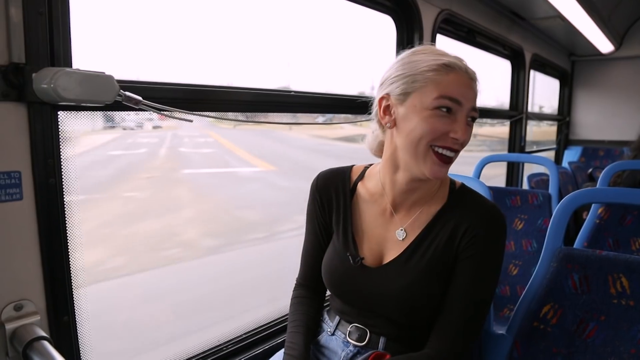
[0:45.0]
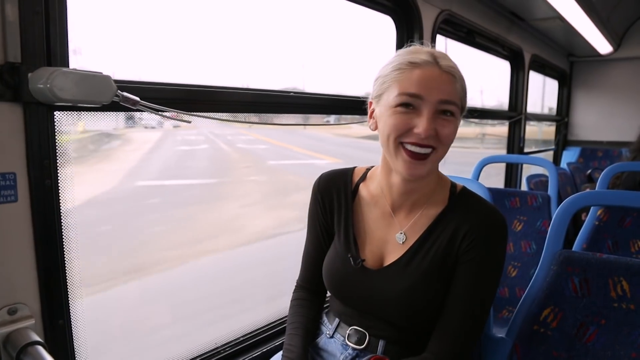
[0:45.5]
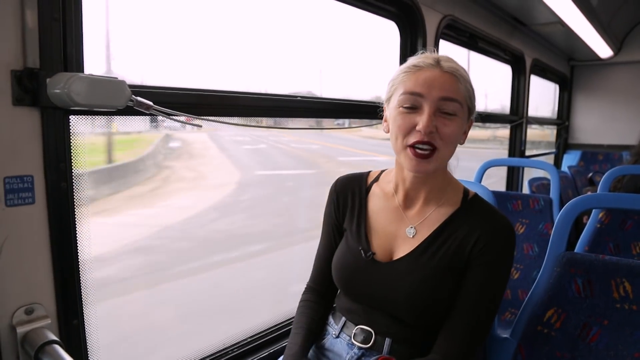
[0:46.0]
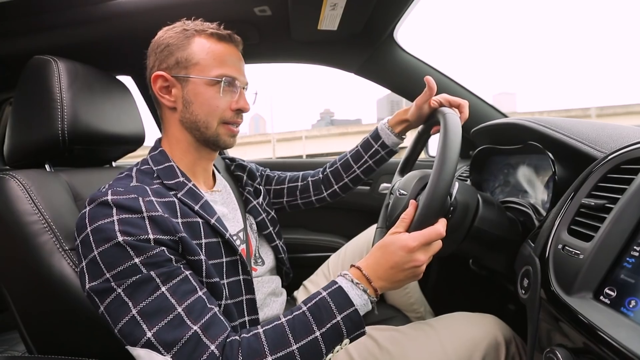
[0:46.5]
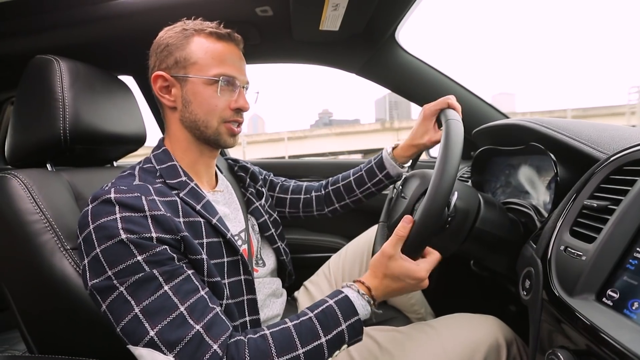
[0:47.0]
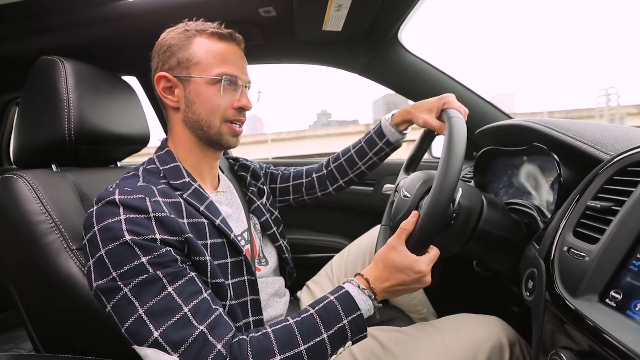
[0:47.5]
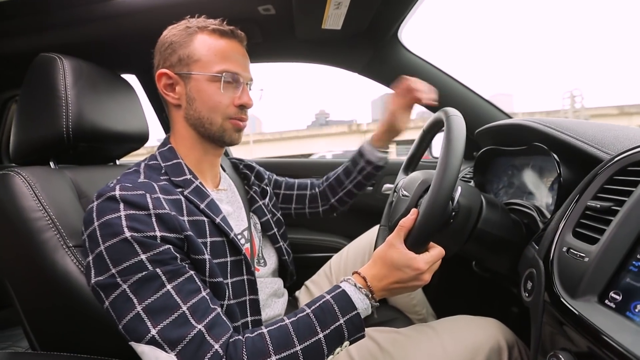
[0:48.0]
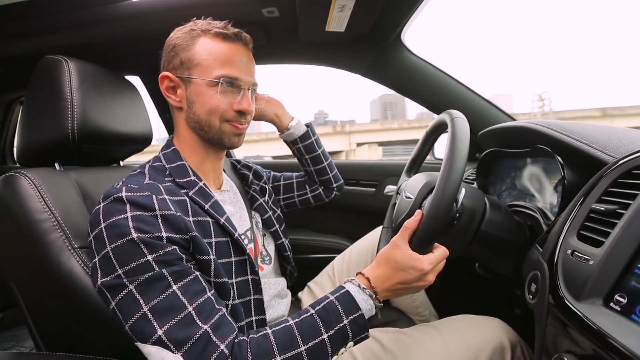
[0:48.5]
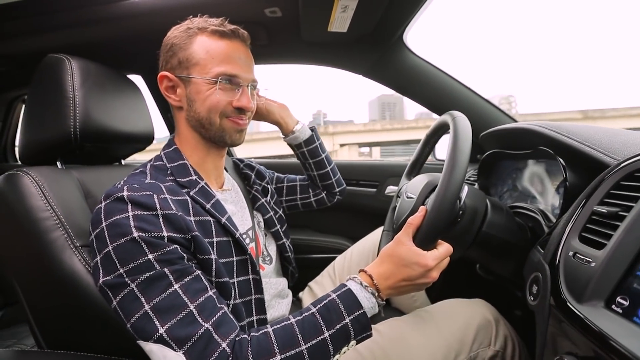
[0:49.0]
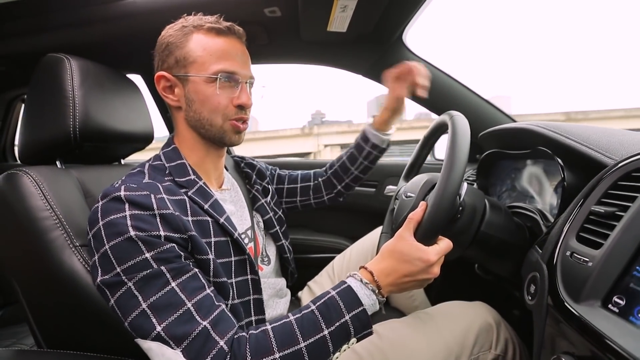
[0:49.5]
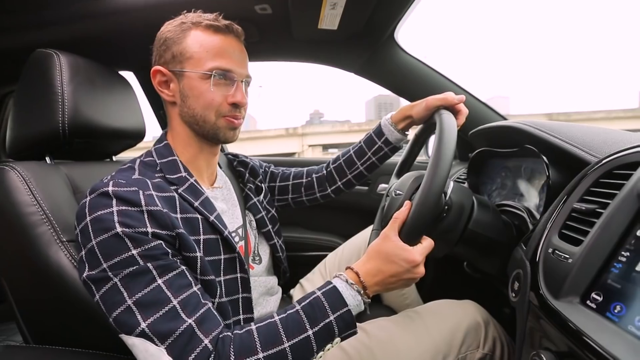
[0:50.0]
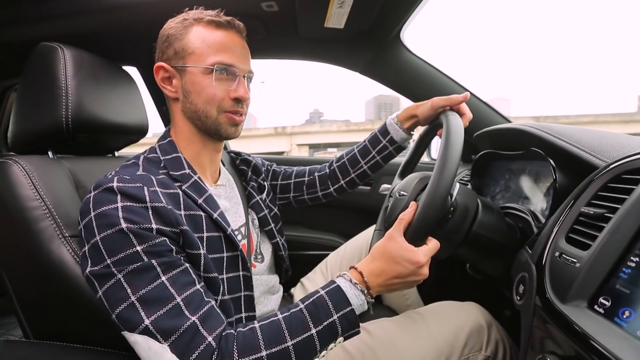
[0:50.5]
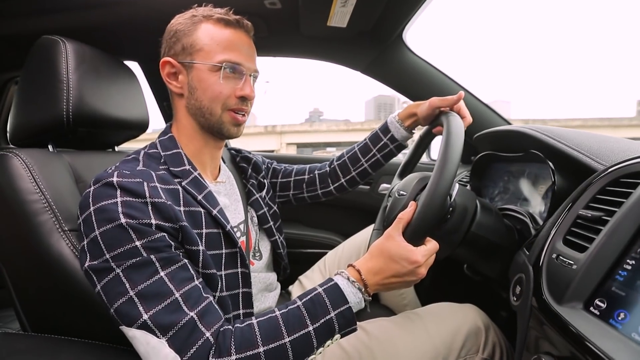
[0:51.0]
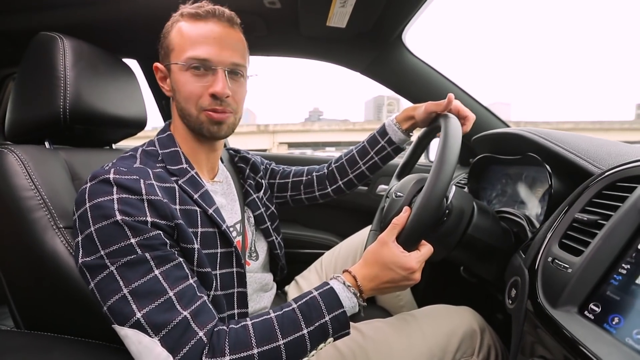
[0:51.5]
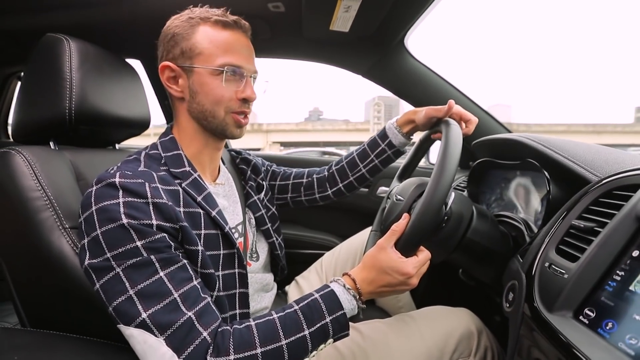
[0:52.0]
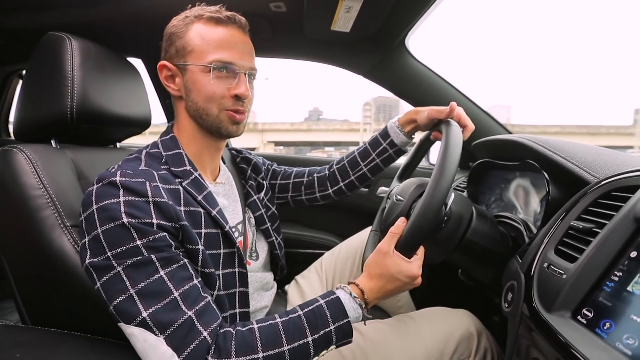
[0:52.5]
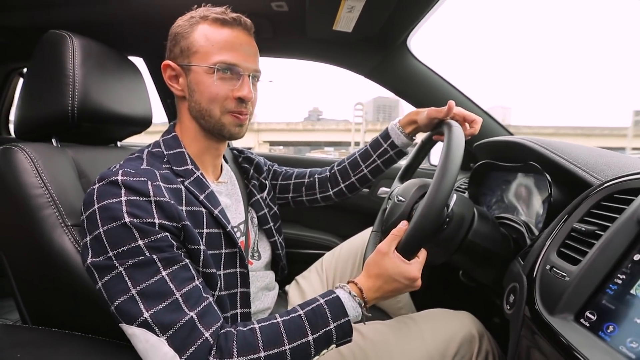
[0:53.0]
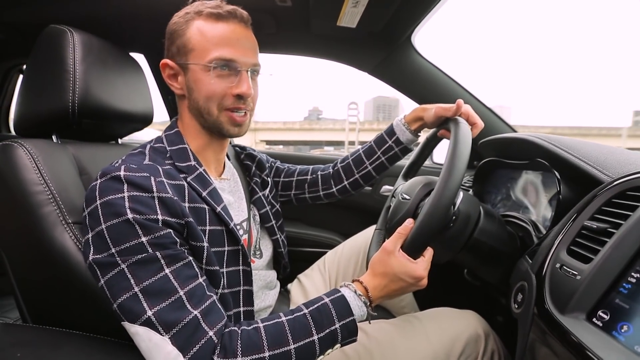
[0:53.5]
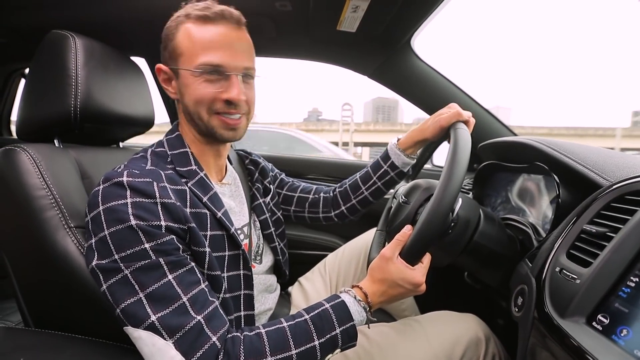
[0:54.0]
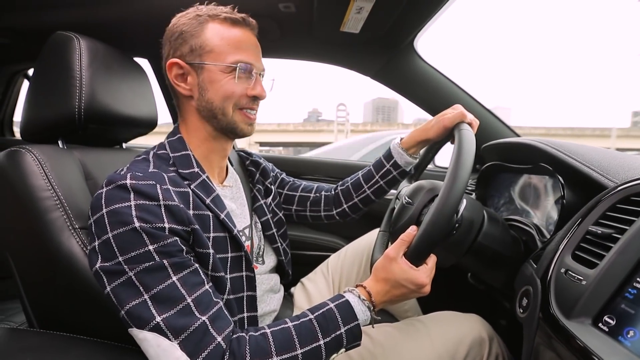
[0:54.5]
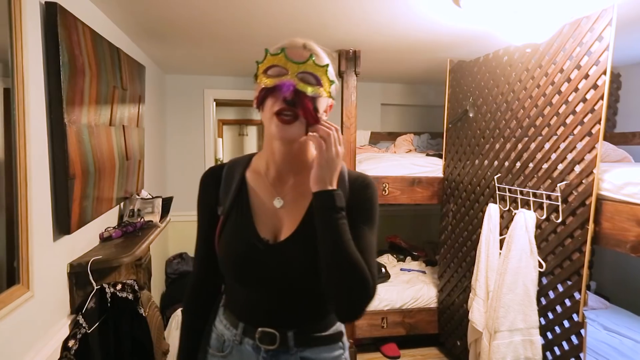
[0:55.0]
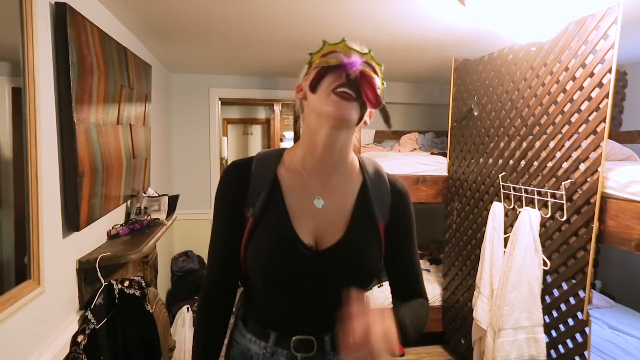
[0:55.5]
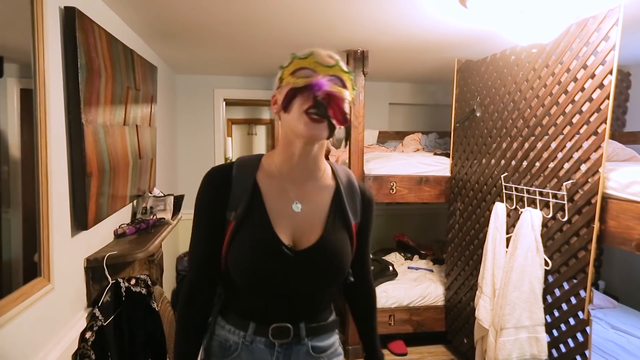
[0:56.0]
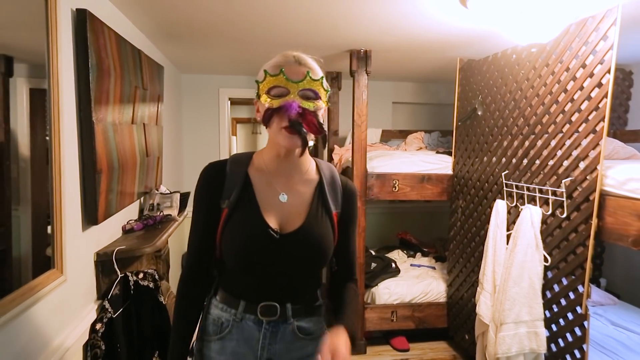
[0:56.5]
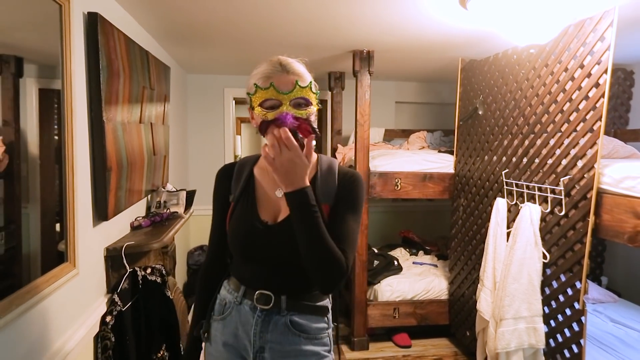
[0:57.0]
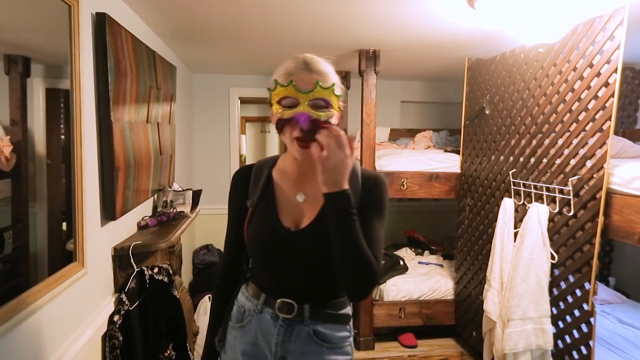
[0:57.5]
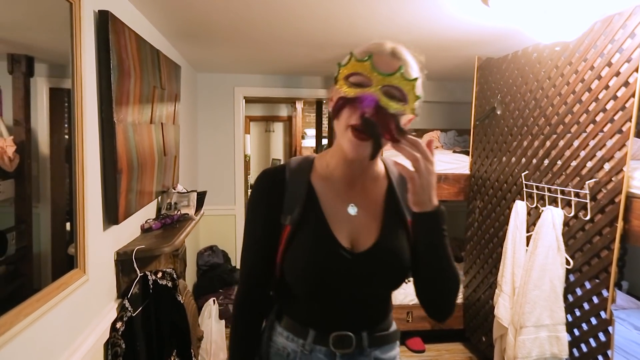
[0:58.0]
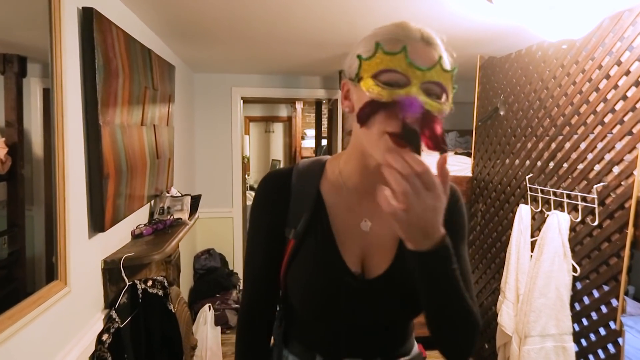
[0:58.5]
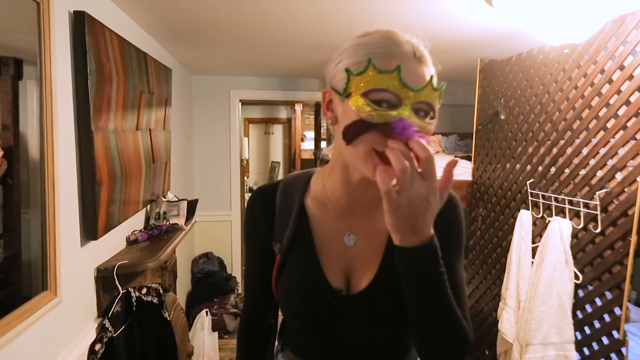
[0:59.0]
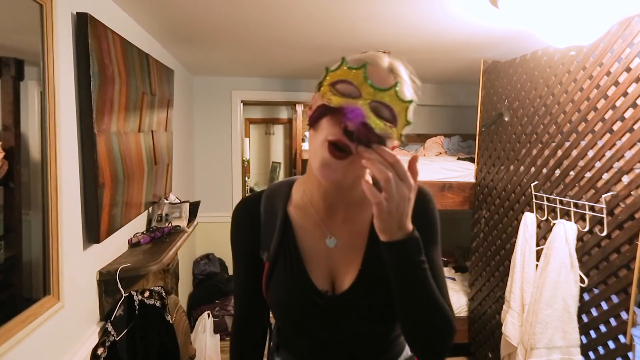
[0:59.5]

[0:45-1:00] A woman in a long-sleeved black shirt, with blonde hair pulled back into a ponytail, is seated on what might be a train or a bus with blue seats. The scene quickly switches to a man who appears to be around his mid-thirties, with glasses, short brown hair and a short brown beard, wearing khaki pants; he is in the driver's seat of a car with a black interior, driving along and talking to the camera. Then, in what might be a hotel room or something similar, the woman wears a colorful mask as she talks directly to the camera. Both seem joyful, smiling and in playful moods. The room has a lot of brown colors, some white towels hanging on hooks behind where she is standing, and appears to have bunk beds.